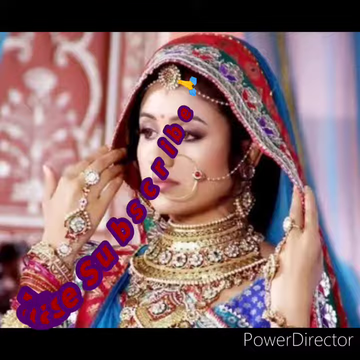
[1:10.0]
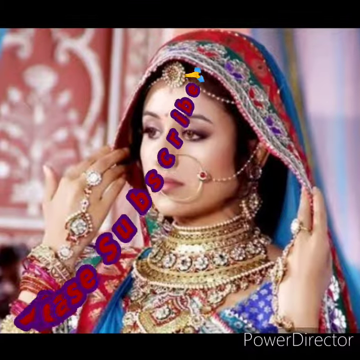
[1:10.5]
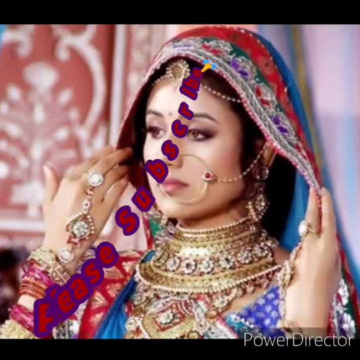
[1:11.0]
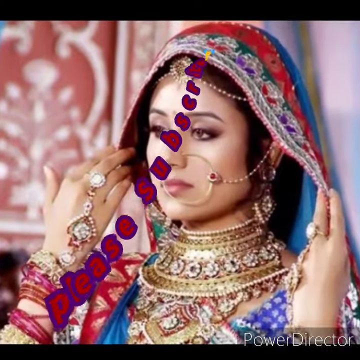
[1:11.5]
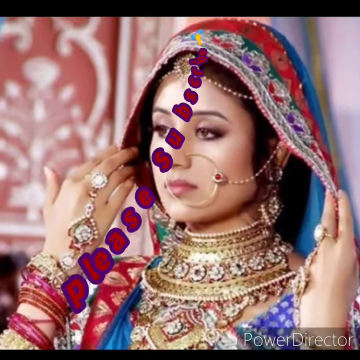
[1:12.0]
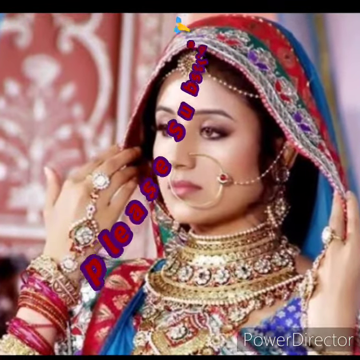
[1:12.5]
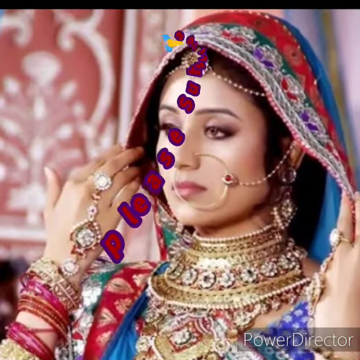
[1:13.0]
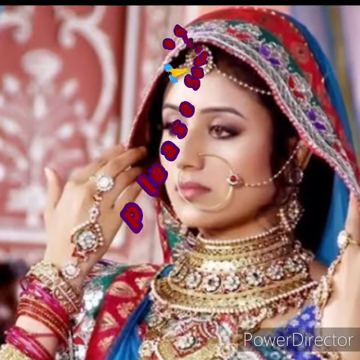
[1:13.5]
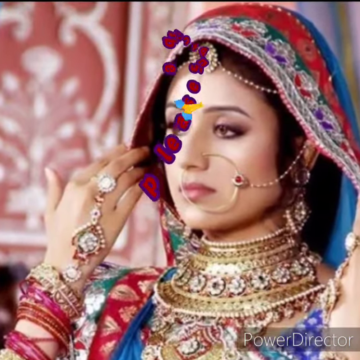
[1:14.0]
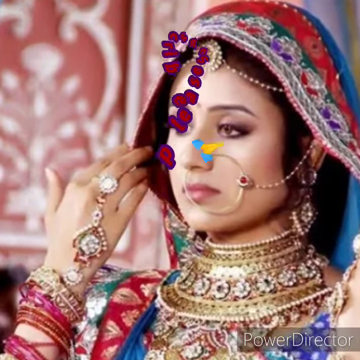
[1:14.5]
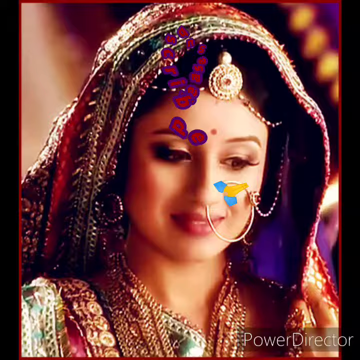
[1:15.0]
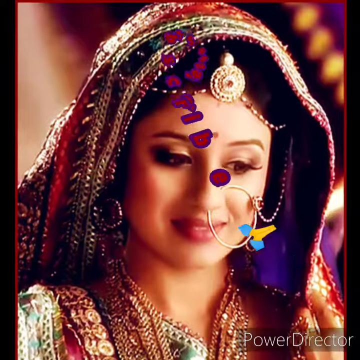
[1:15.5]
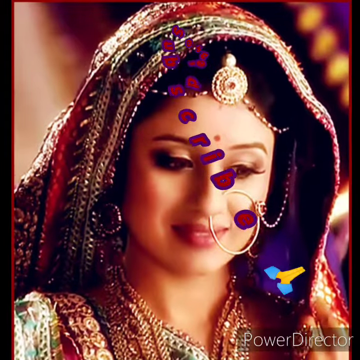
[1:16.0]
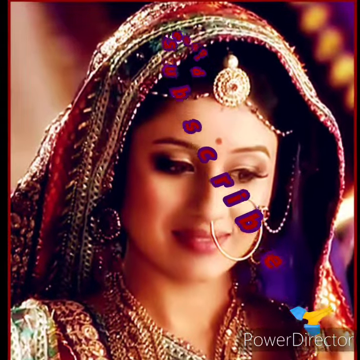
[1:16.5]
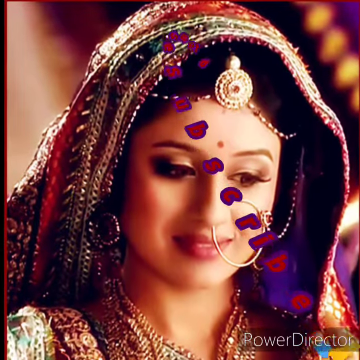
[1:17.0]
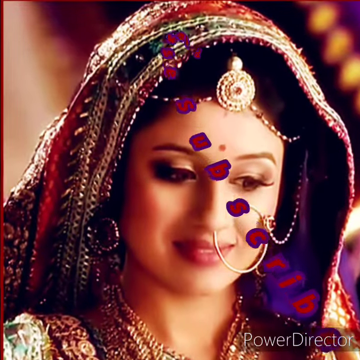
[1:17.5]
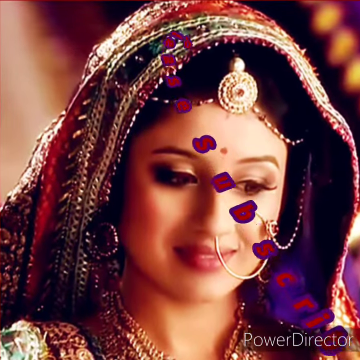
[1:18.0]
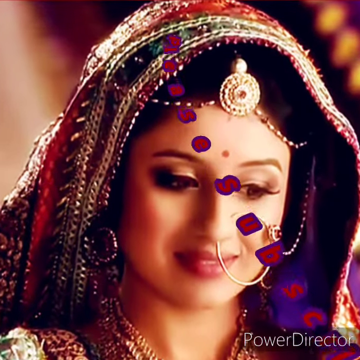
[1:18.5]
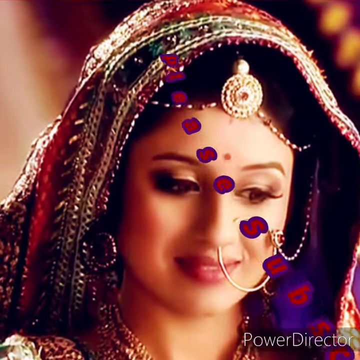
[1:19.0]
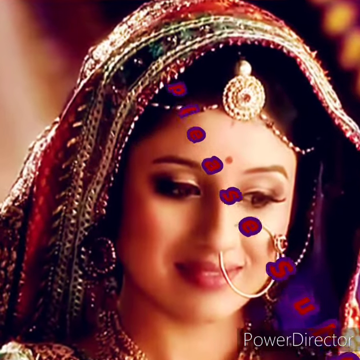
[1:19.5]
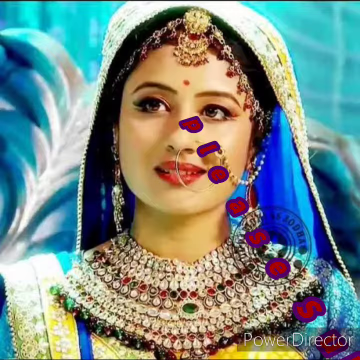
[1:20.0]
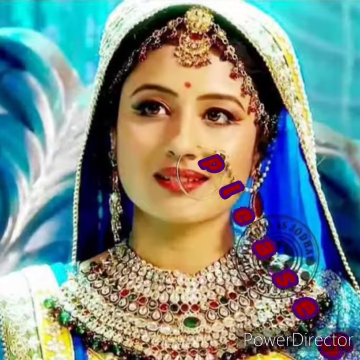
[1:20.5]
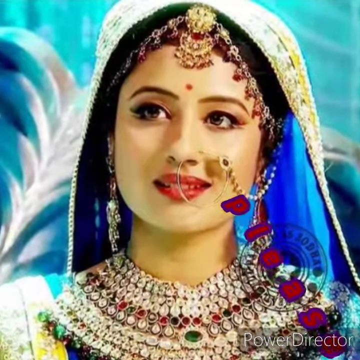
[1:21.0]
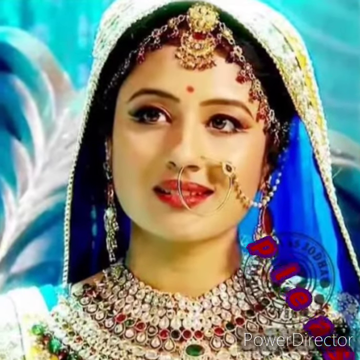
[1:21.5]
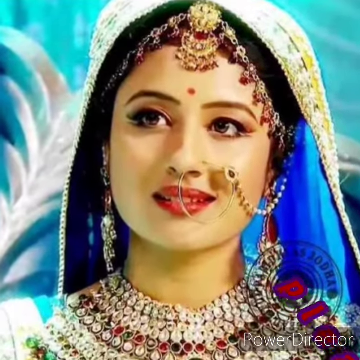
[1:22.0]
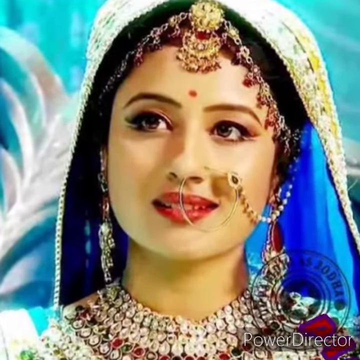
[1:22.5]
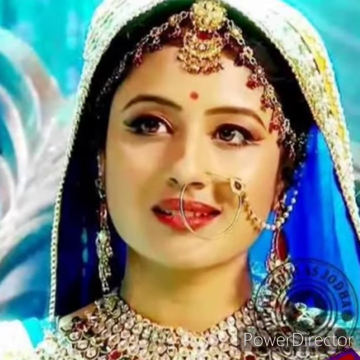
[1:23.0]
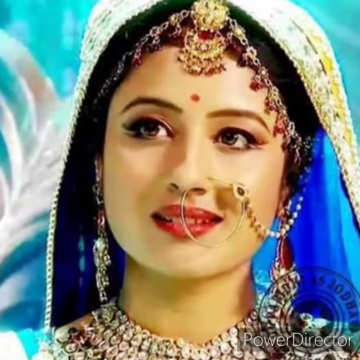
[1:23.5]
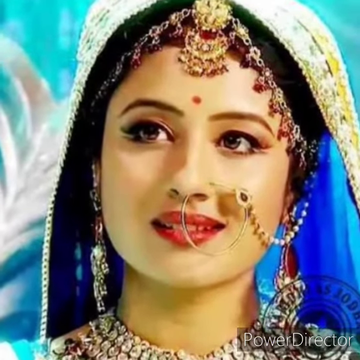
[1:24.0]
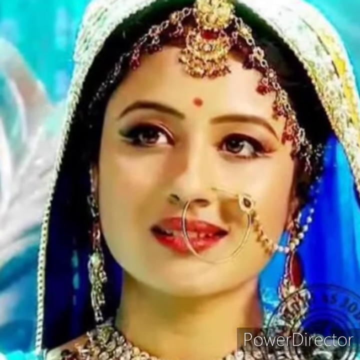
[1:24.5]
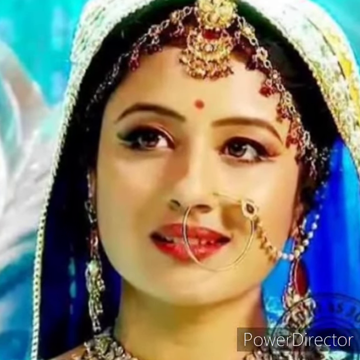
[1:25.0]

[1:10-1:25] A woman in traditional Indian clothing has a scarf-like cloth draped around her head, filled with red, purple, blue and teal colors, and she holds it on each side with her hands. On her middle finger is a ring with a jewel, attached to her wrist, and her wrist is filled with gold and different colored bangles. She wears a gold necklace-type piece and a blue, white and red shirt-type outfit, and has a nose piercing with a ring. She looks straight ahead. Another woman wears a different type of headgear, a hoop in her nose with a red ruby attached that goes to her ear, and a red dot on her forehead; her colors are red, gold and blue. Another woman wears long earrings, a gold hoop attached to her ear, a jeweled headband on her forehead, the red dot, a jeweled neck necklace, and red lipstick. She is smiling and looking to the right.